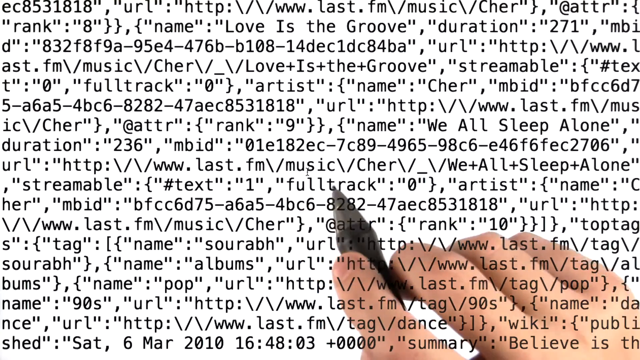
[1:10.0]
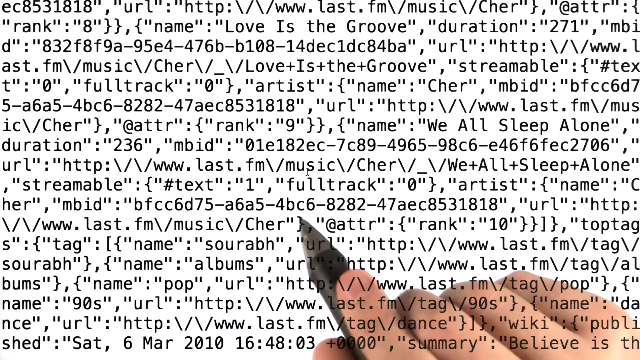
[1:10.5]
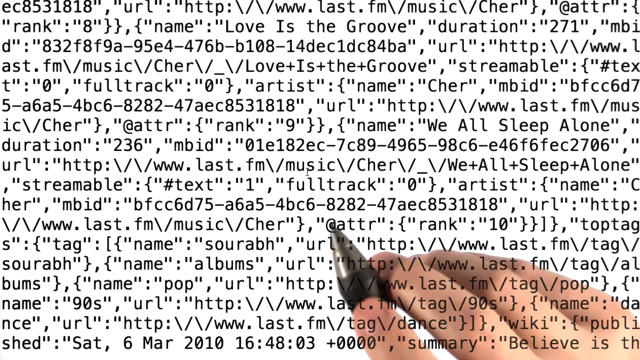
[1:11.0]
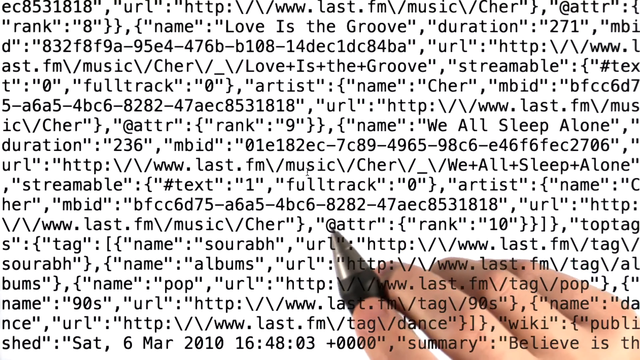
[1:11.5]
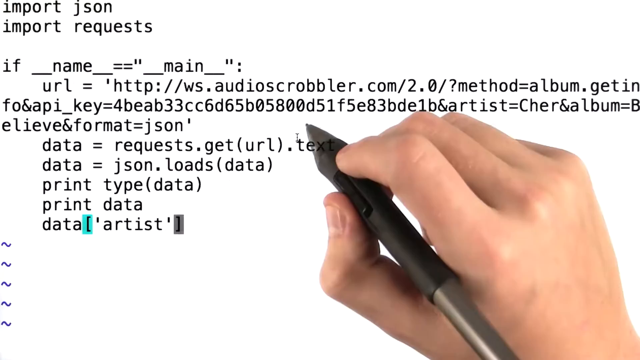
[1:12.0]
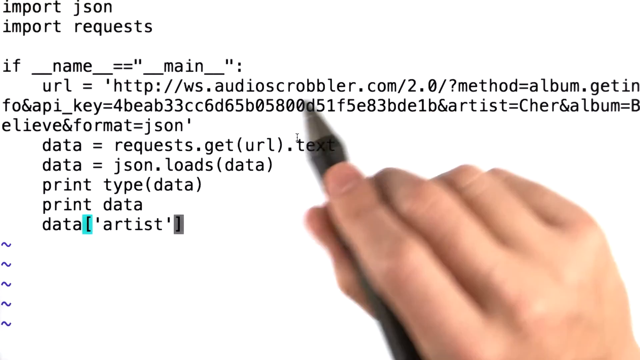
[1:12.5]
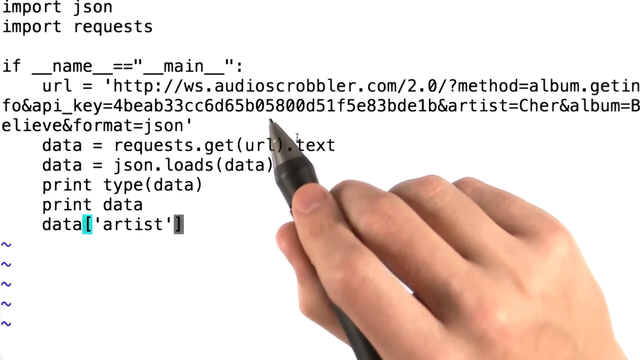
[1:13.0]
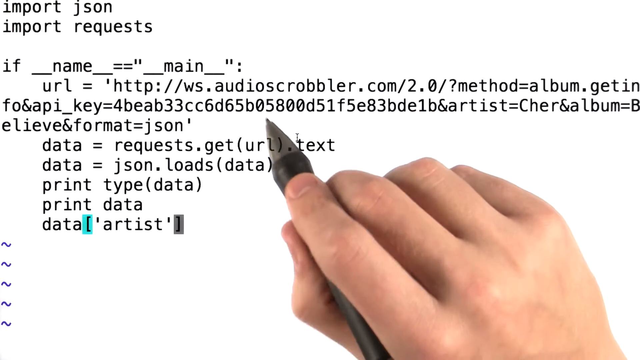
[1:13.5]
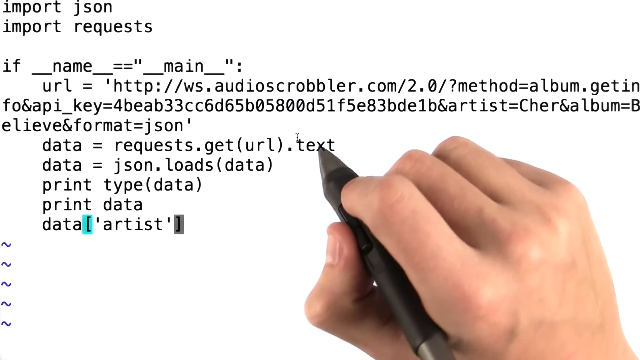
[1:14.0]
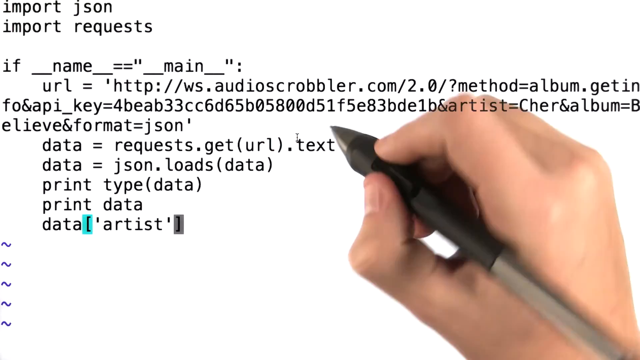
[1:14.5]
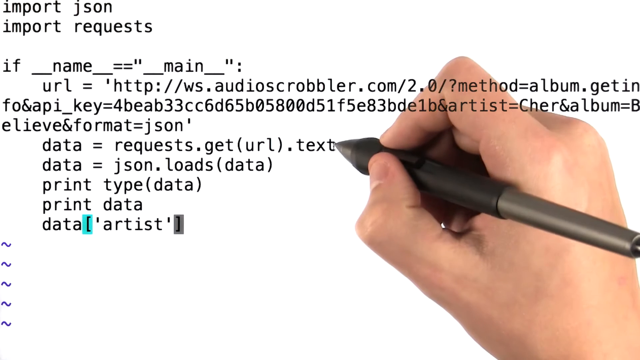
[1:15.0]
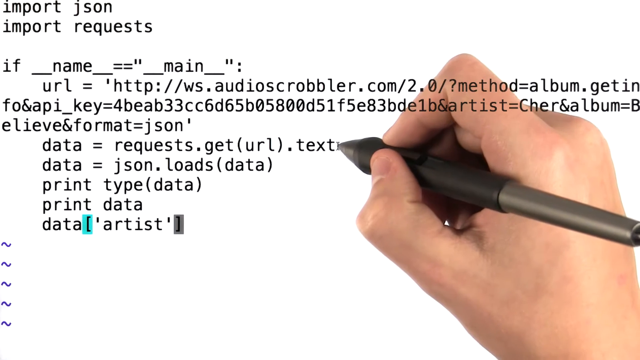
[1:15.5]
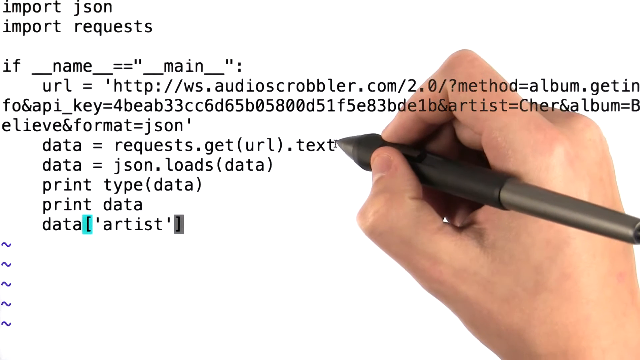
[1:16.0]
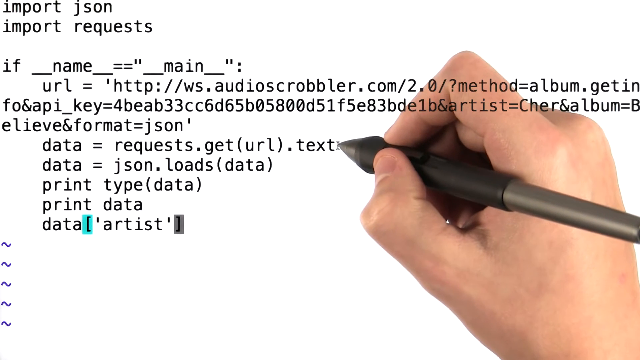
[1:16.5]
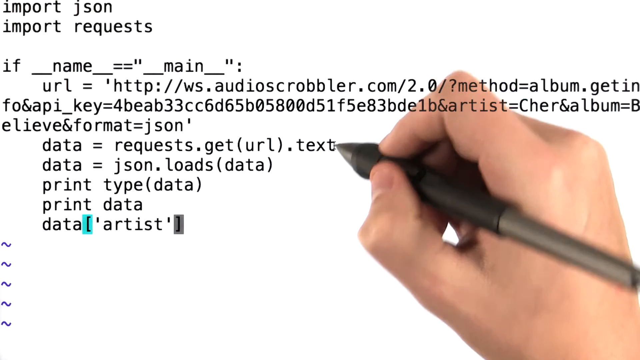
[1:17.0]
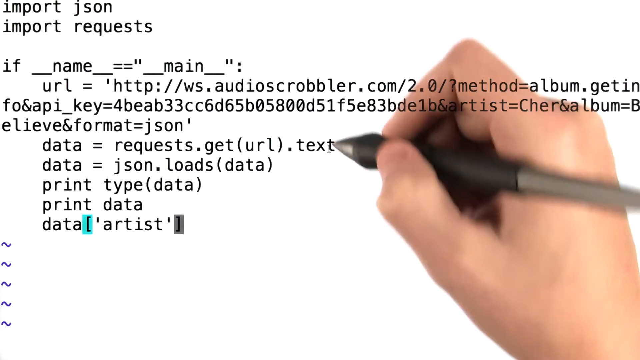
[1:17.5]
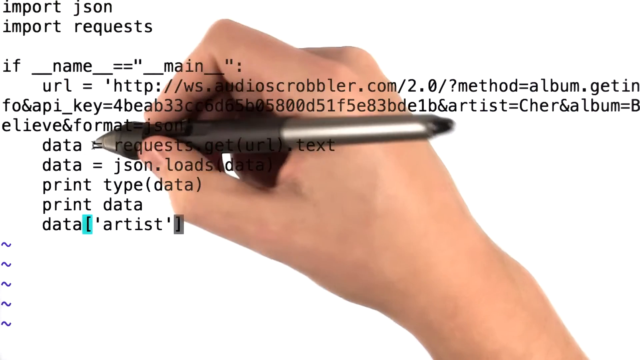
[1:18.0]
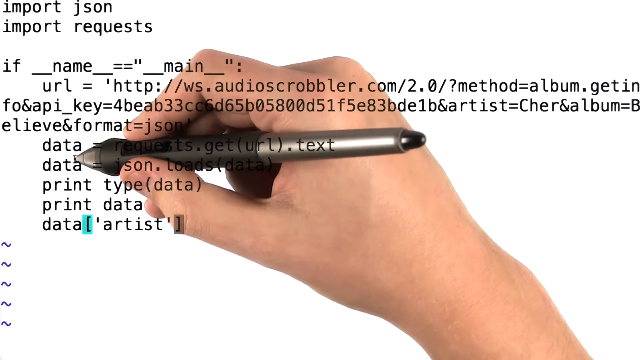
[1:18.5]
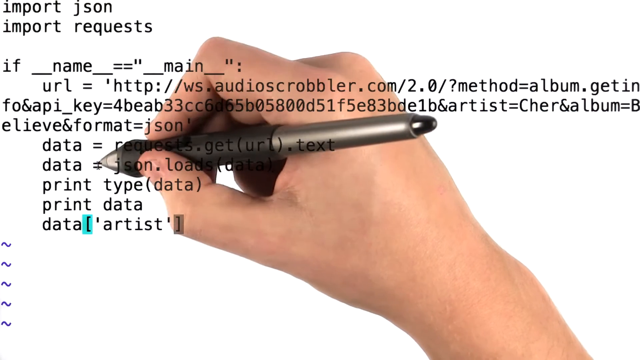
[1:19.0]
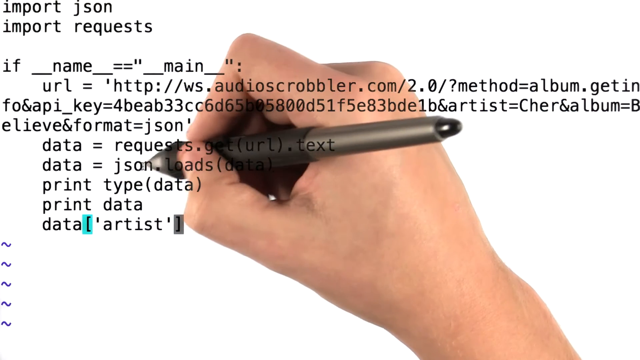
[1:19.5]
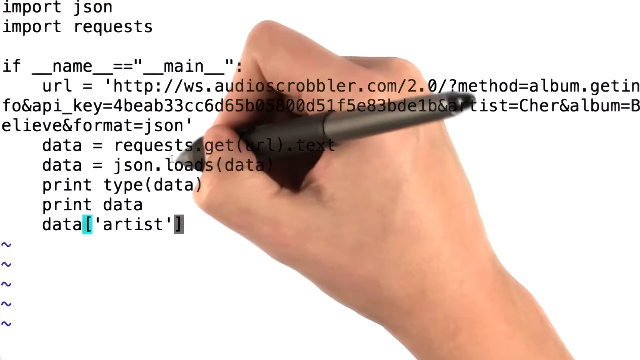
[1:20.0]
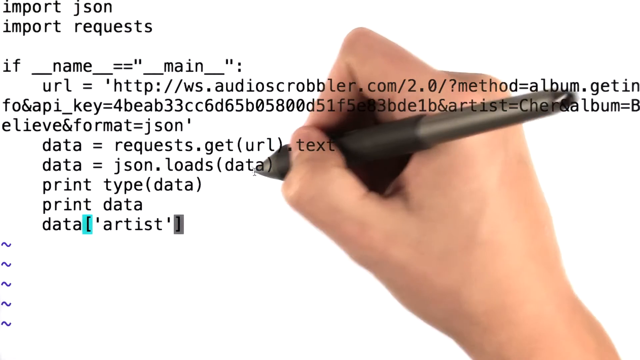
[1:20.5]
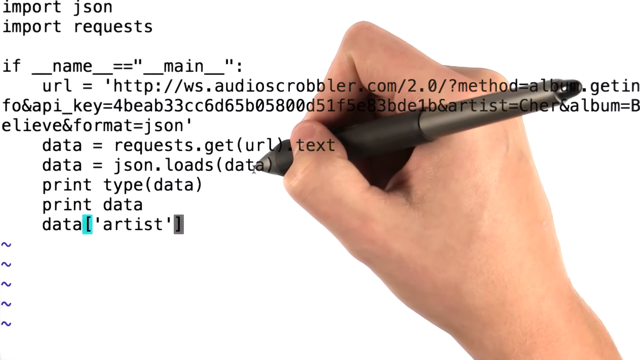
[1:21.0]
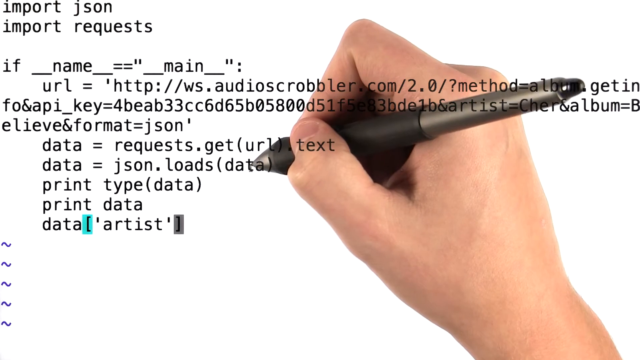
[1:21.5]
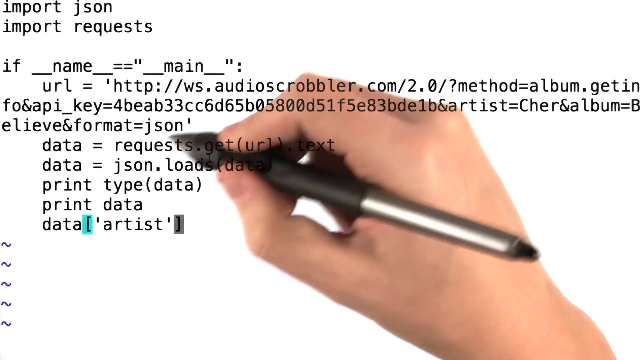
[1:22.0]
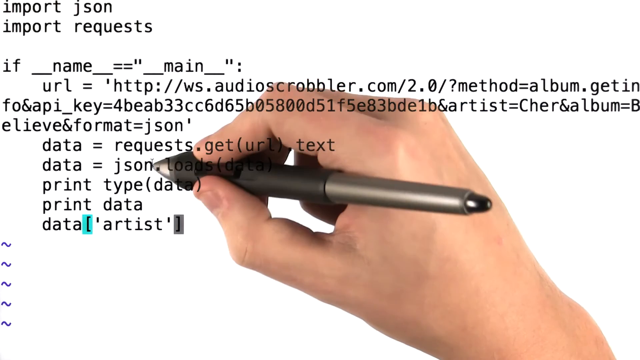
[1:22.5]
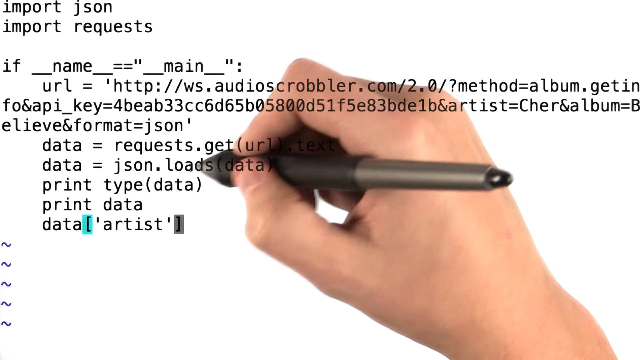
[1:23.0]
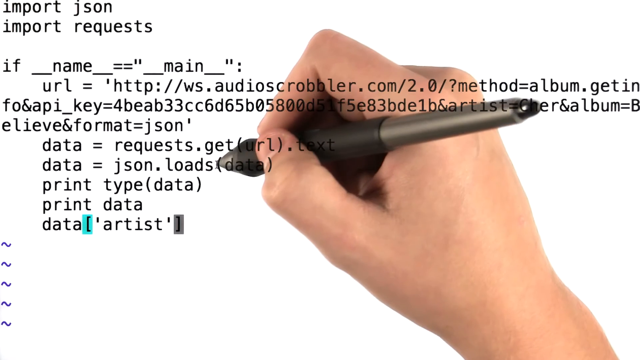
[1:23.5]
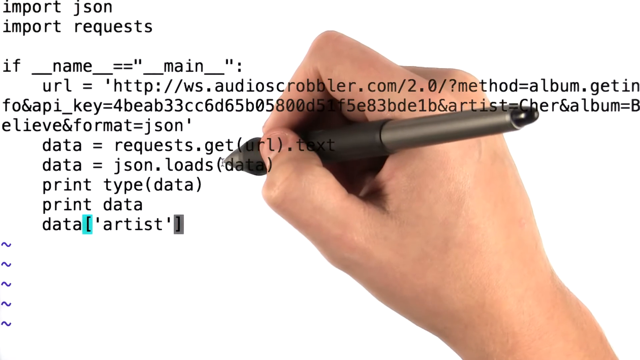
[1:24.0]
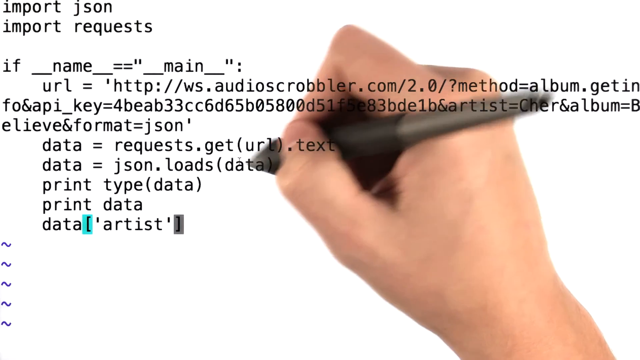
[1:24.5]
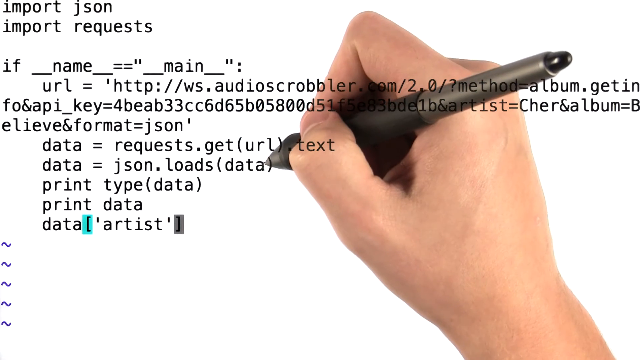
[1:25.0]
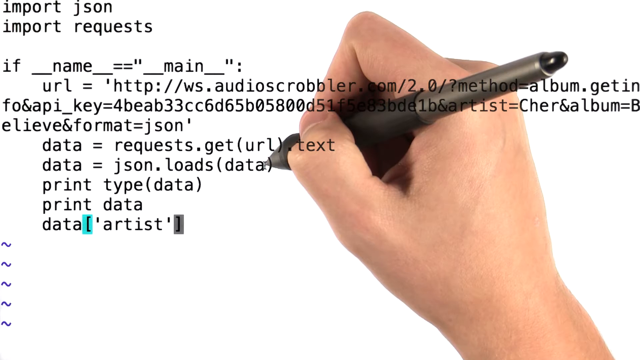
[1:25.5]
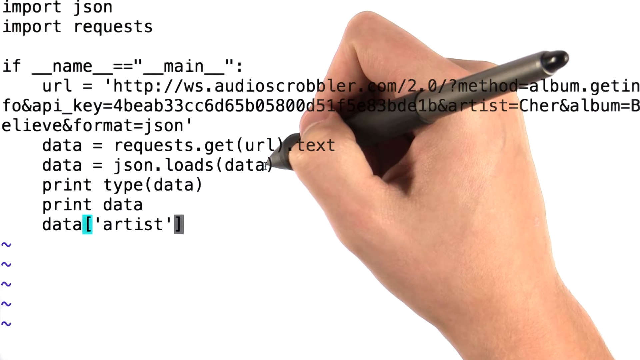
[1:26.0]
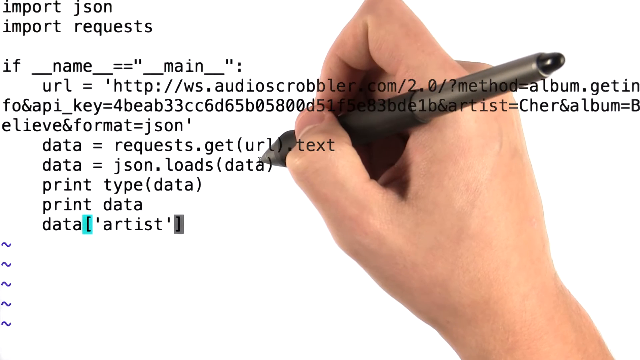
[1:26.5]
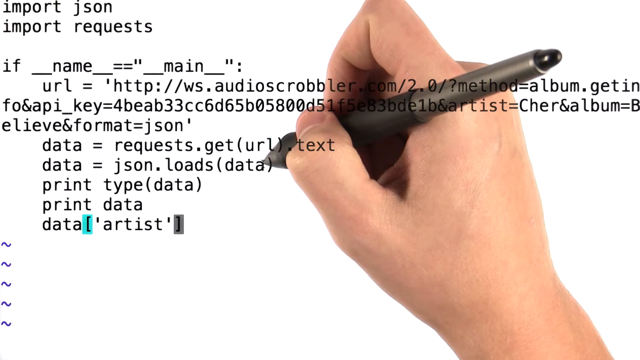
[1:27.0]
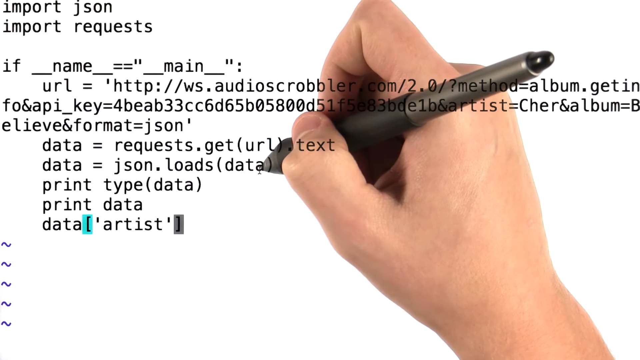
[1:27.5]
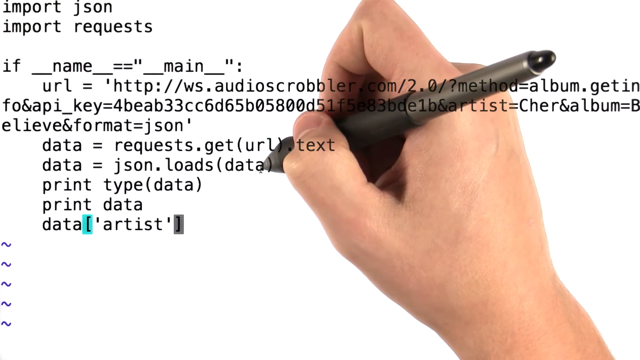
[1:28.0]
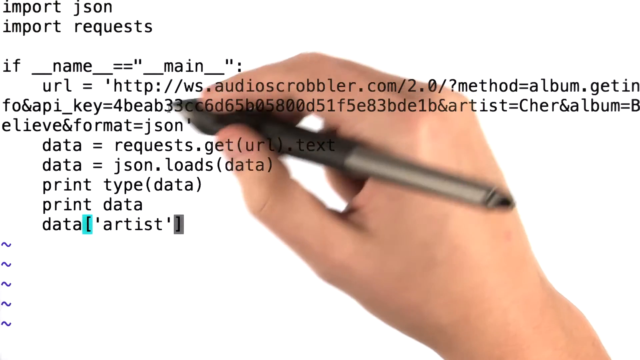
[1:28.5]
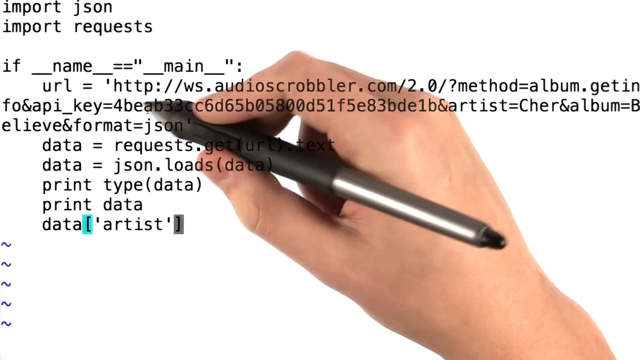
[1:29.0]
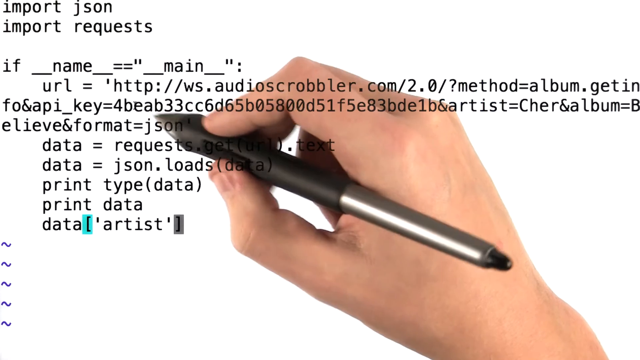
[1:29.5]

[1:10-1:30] The whole page appears to be covered with code that is hard to make out. Visible text includes "www.last.fm", "music", "attributes", "rank", a song named "love is the groove", "duration 271" followed by a string of numbers, another URL, "streamable", "artist", and another entry, "we all sleep alone". It is a list of names, URLs and artists all run together. A hand holding a pen moves around the page. The screen then changes back to a more readable page showing the import JSON code and the artist line.